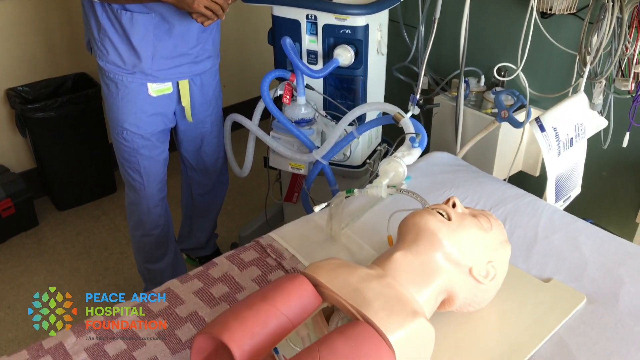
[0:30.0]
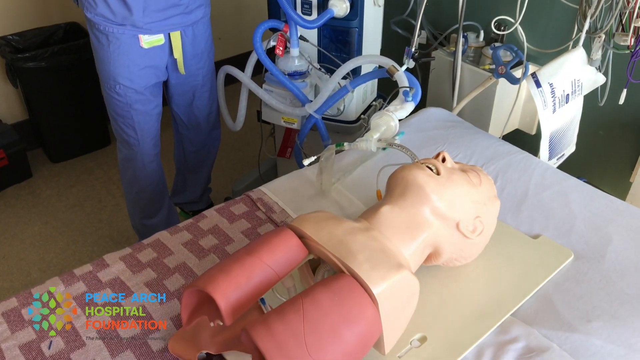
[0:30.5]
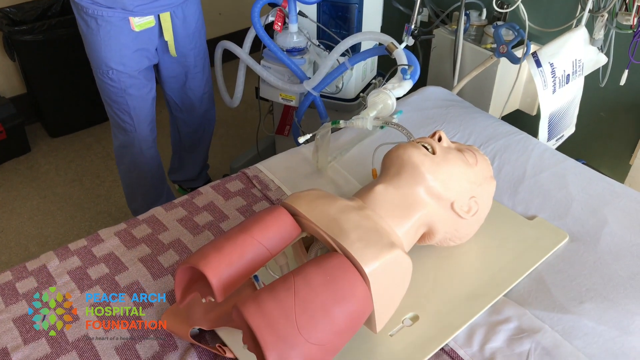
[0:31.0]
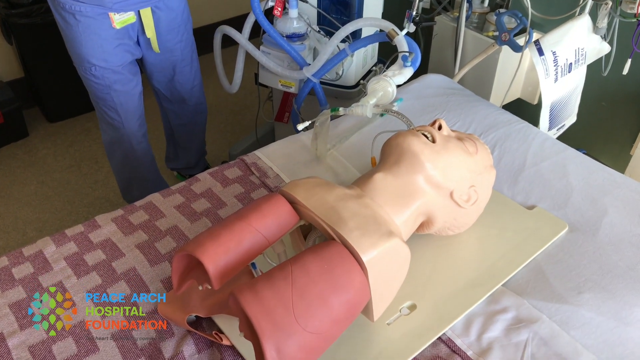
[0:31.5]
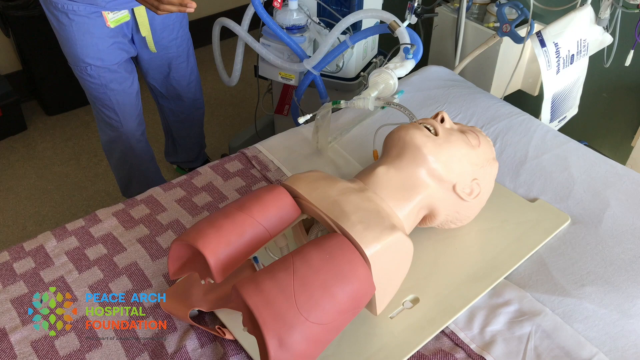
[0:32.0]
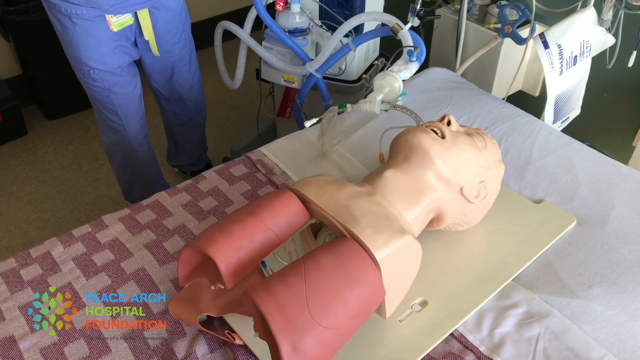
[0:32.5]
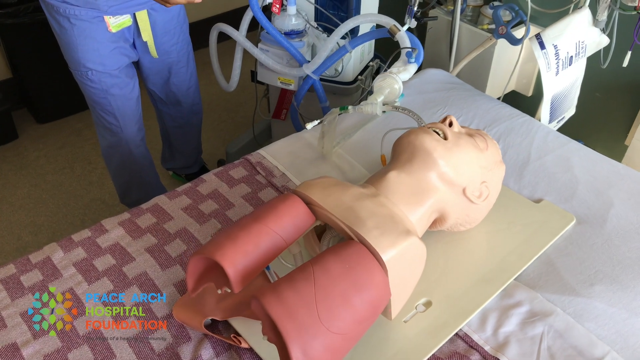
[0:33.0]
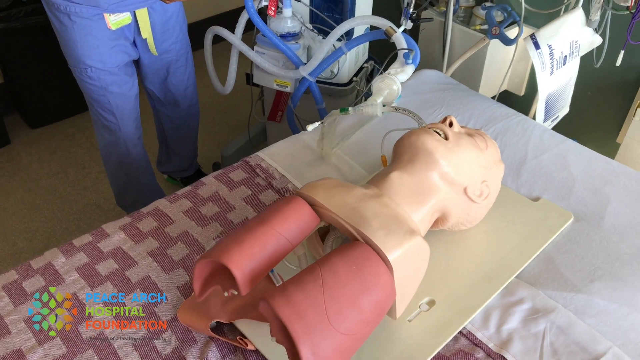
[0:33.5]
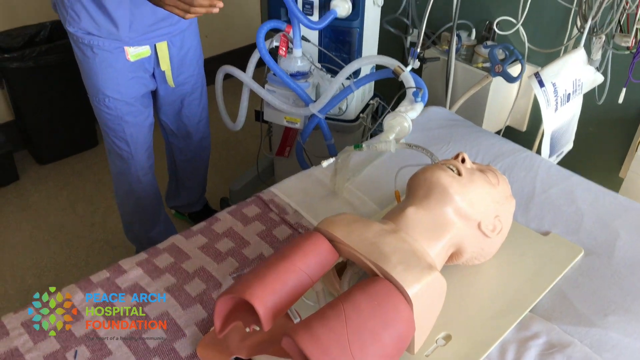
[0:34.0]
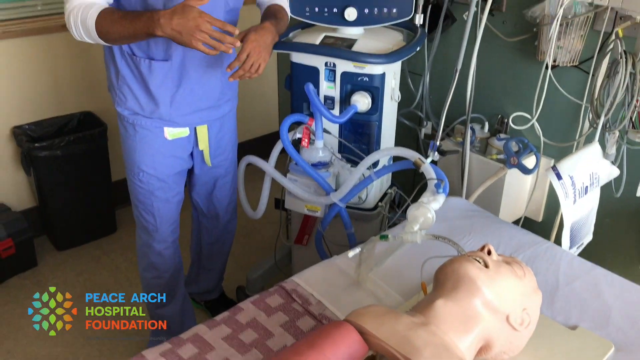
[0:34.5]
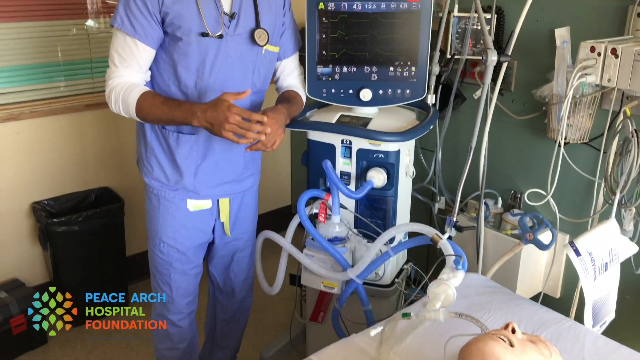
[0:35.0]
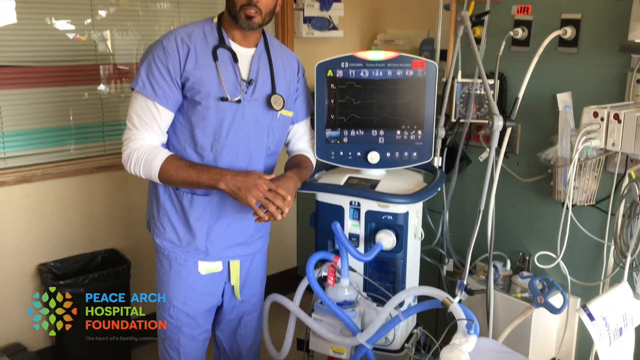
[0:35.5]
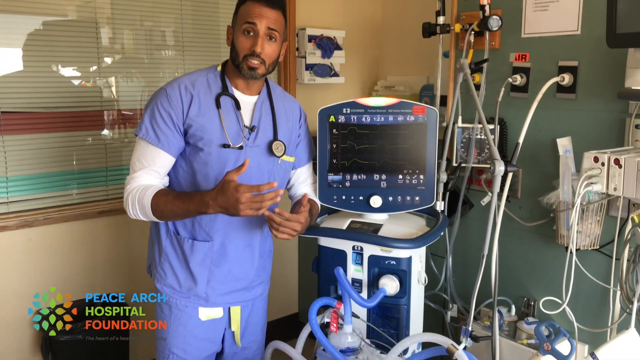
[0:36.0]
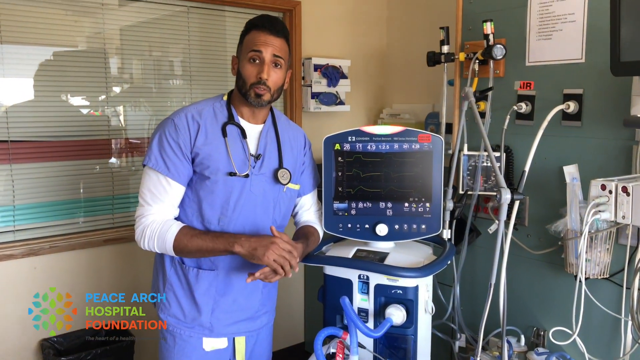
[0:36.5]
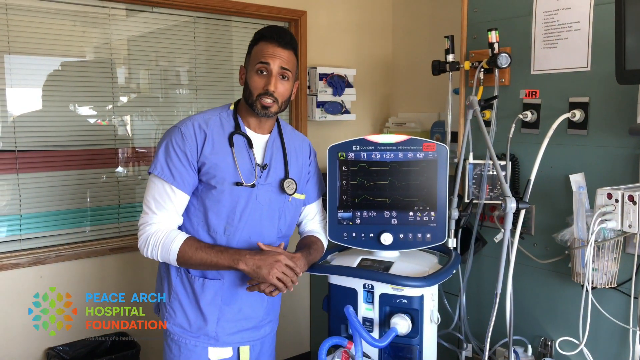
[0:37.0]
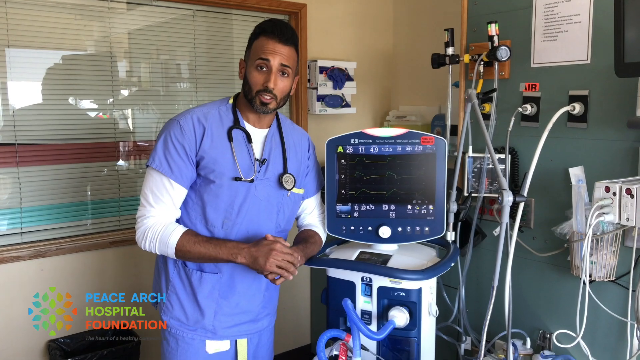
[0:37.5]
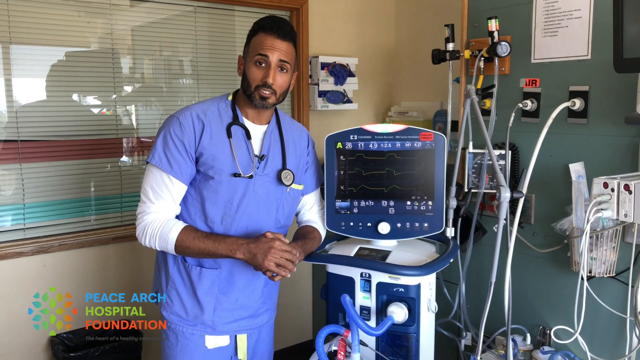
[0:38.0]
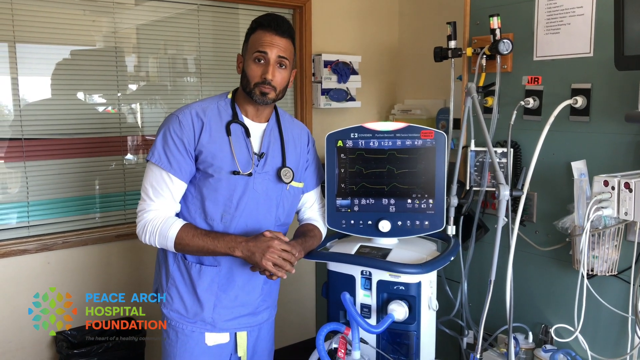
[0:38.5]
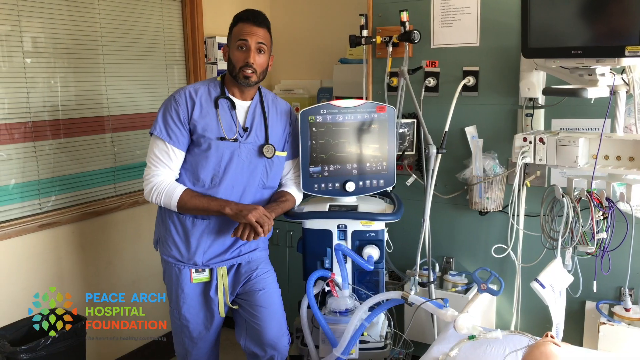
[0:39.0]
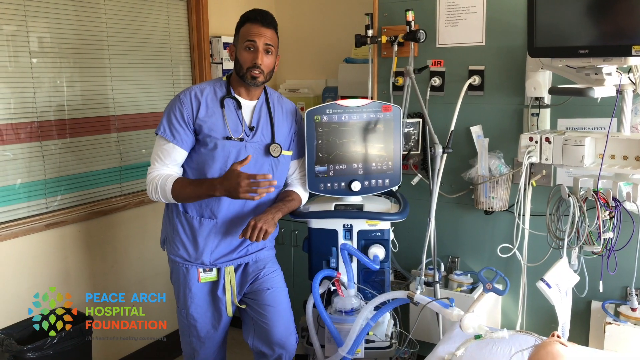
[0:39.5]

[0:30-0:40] The doctor is seen from the waist down on the left-hand side of the screen, with the CPR dummy hooked up to an intubation machine on the right-hand side. As the camera moves around, the doctor's hand is moving. He speaks directly to the camera as it pans up to his face, gesturing with his hands as he talks, and then clasps his hands in front of him. The camera moves back out, showing the doctor at a further distance as he explains something earnestly. He is still wearing blue scrubs and has a stethoscope around his neck.